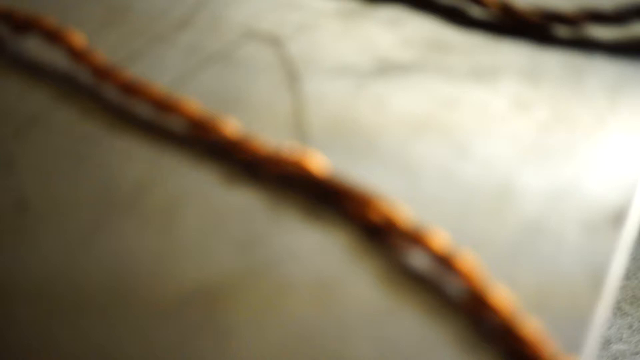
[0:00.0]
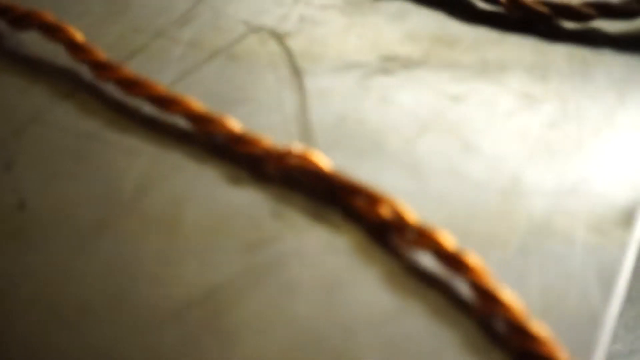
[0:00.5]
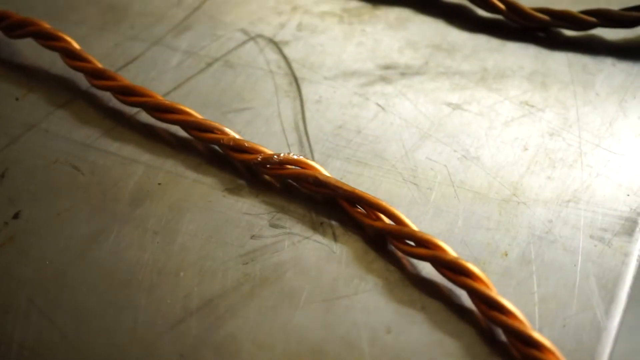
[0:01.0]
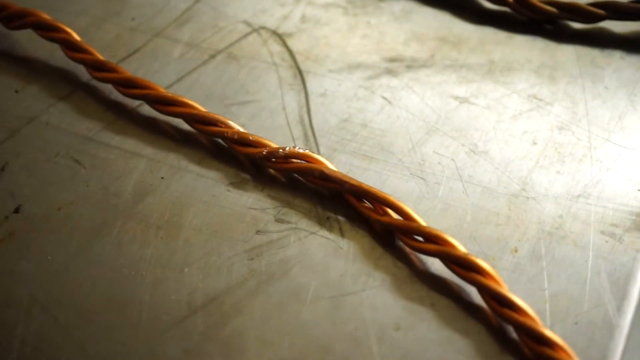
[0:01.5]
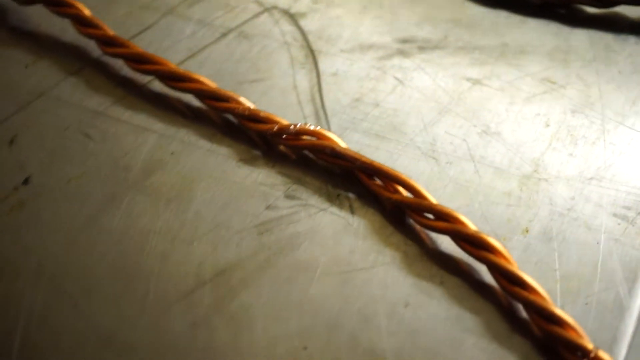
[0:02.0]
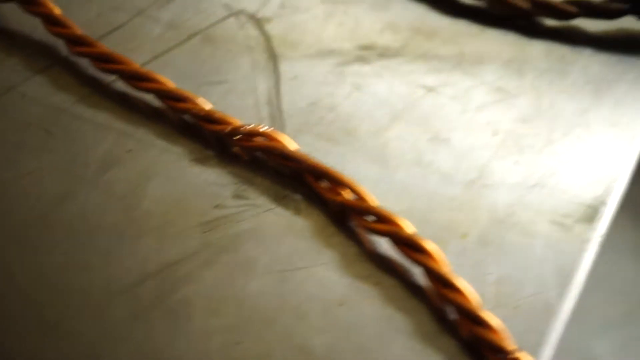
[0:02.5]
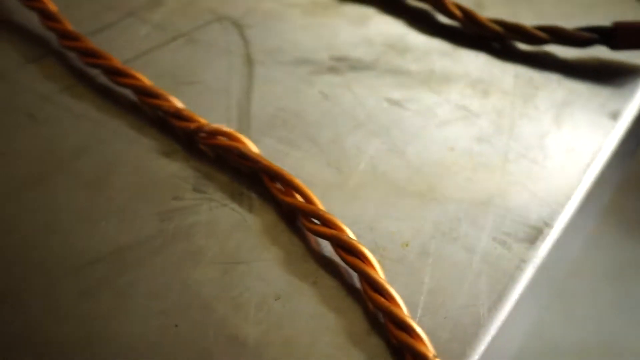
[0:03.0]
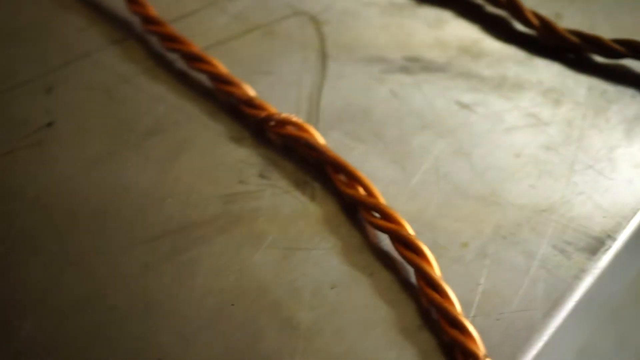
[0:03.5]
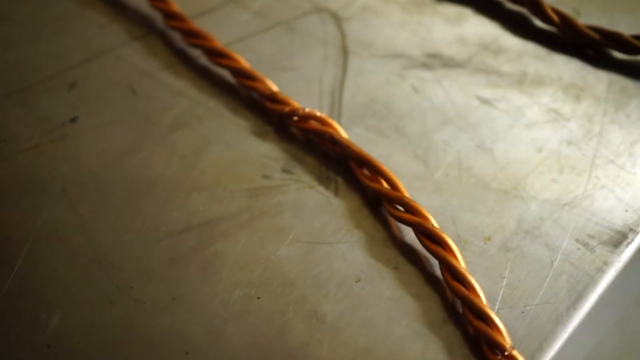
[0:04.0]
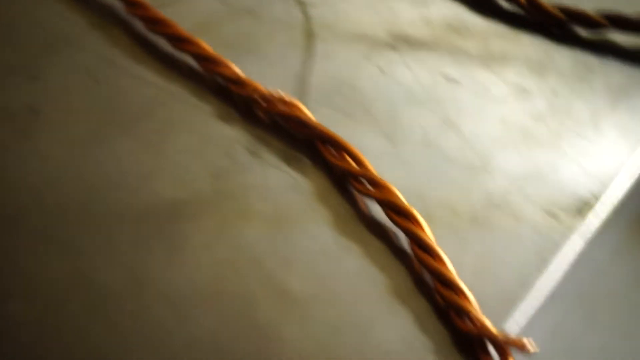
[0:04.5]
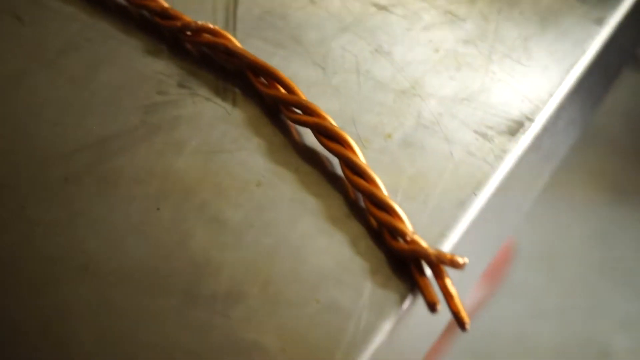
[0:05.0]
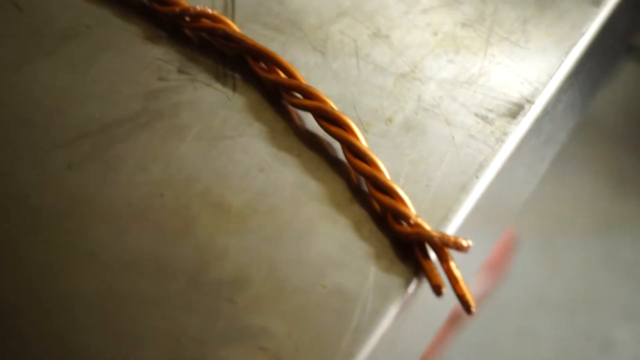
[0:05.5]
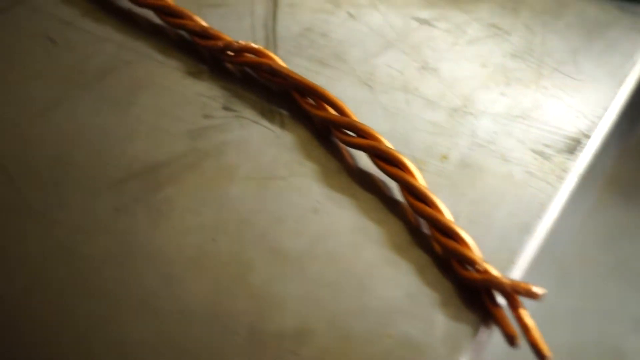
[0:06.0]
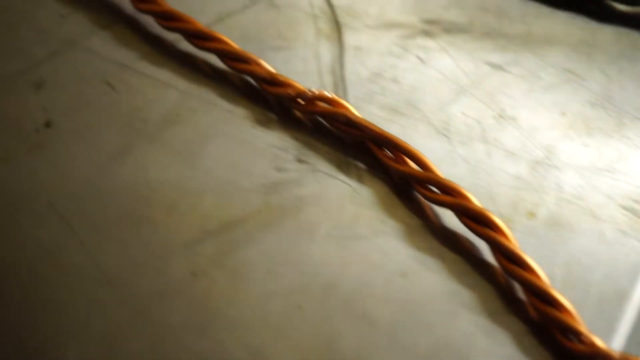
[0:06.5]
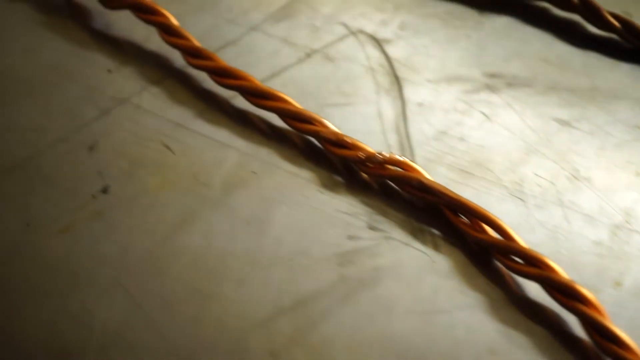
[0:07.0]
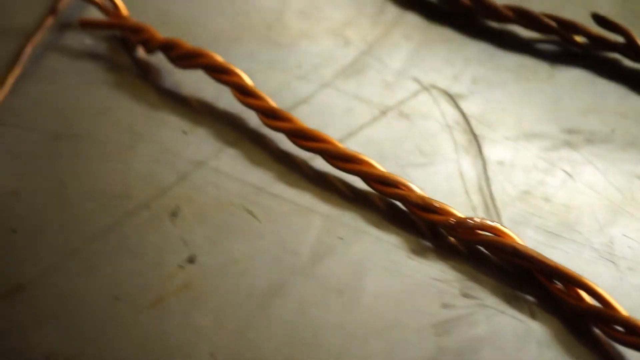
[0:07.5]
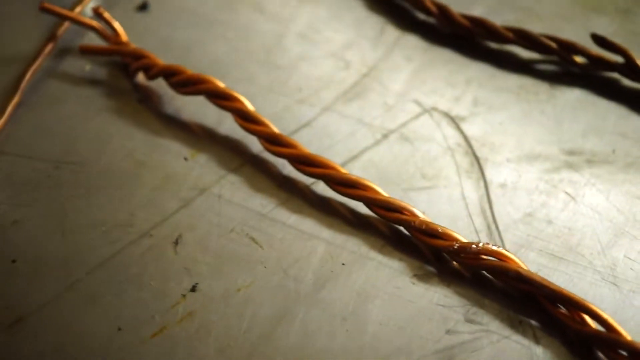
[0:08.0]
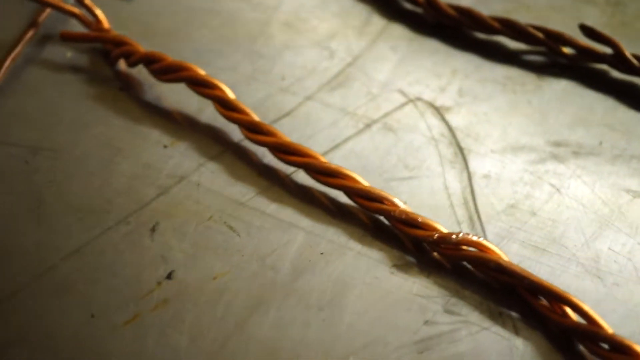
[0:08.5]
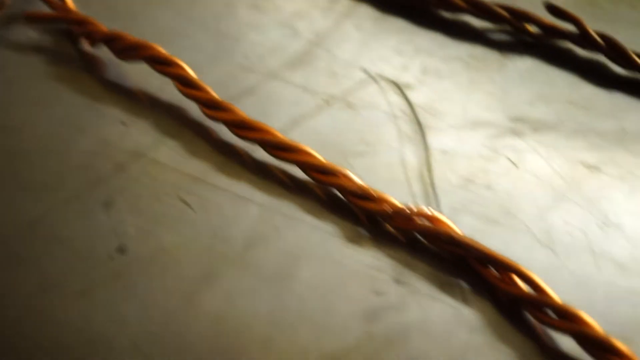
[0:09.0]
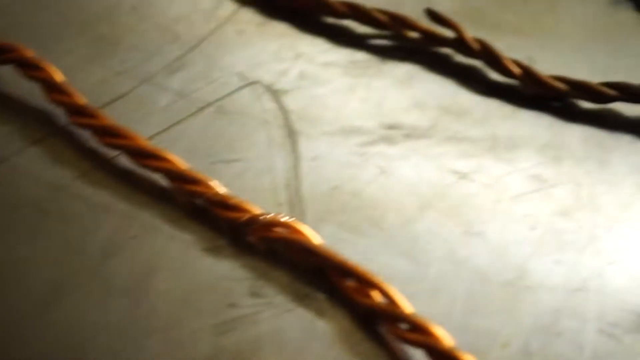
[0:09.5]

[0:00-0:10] The video starts out of focus, then quickly focuses on a braided string made up of three copper wires. The camera stays closely on these braided wires, then pans upward to show an additional wire that is similarly braided. The braids are set on a stainless steel surface that is heavily scratched and worn. The bottom copper braid appears lighter in color than the one at the top of the frame, which looks darker and more worn. Another copper braid can be seen just off screen.